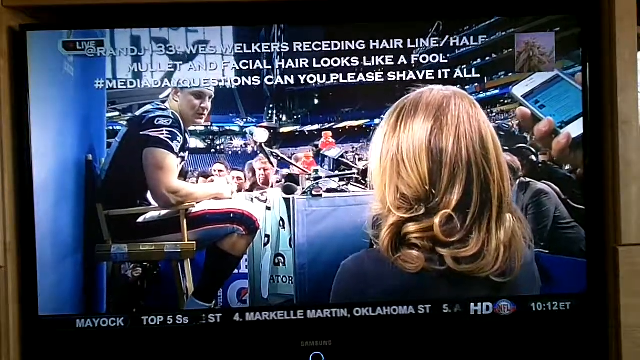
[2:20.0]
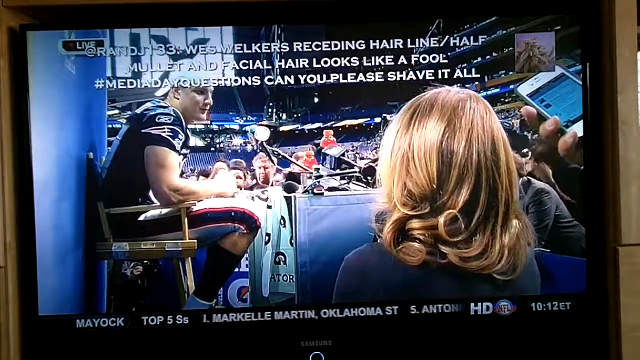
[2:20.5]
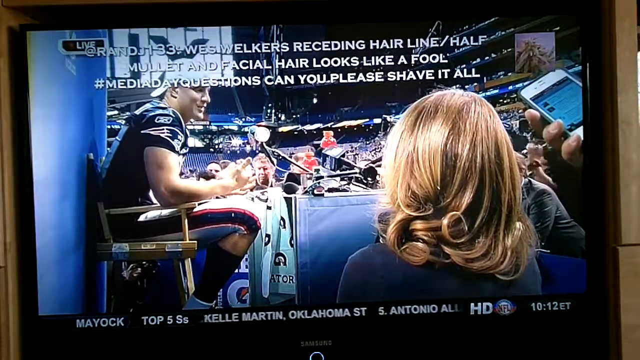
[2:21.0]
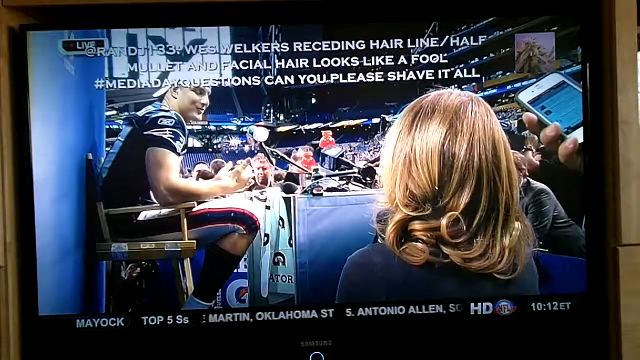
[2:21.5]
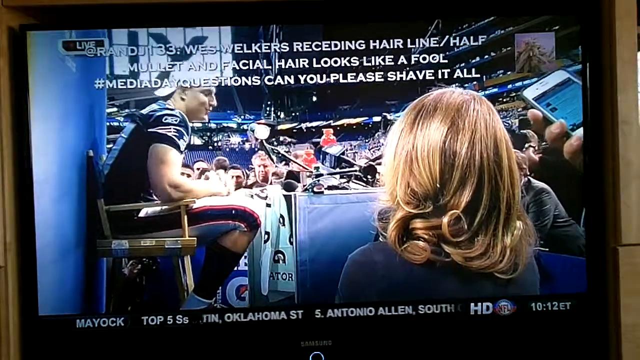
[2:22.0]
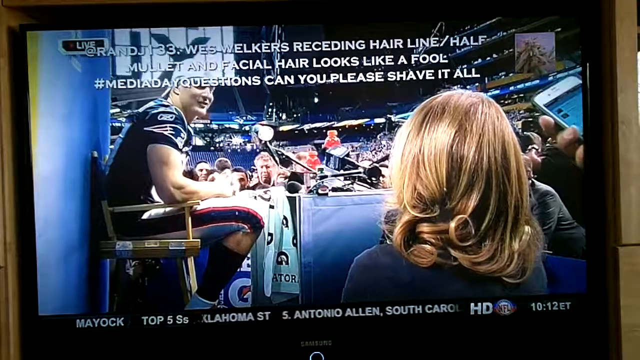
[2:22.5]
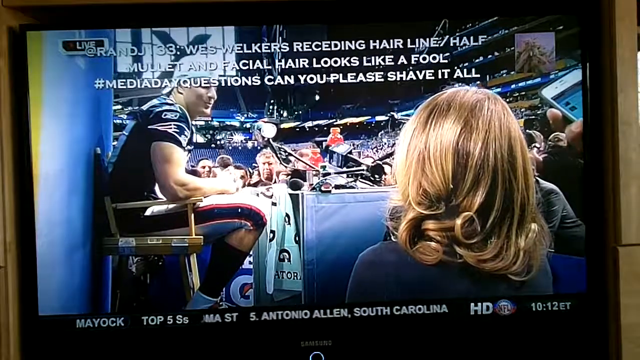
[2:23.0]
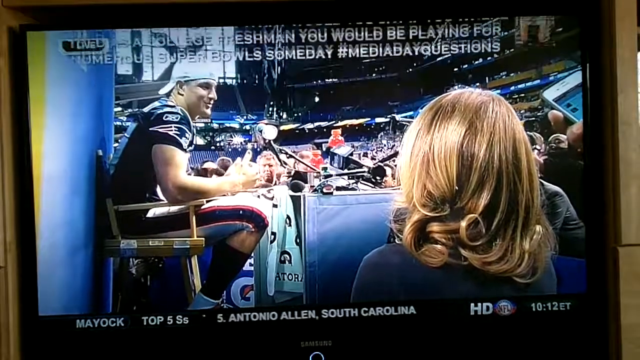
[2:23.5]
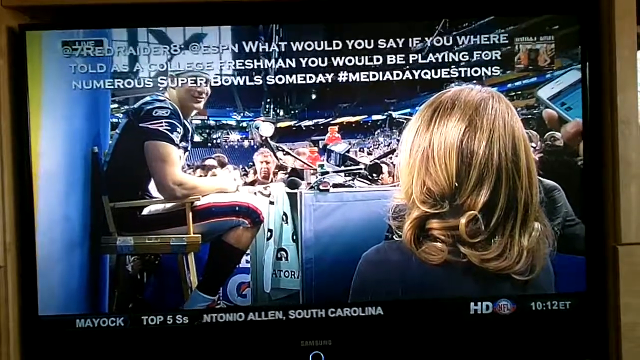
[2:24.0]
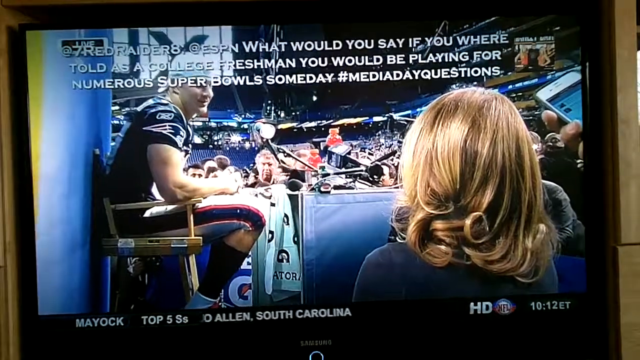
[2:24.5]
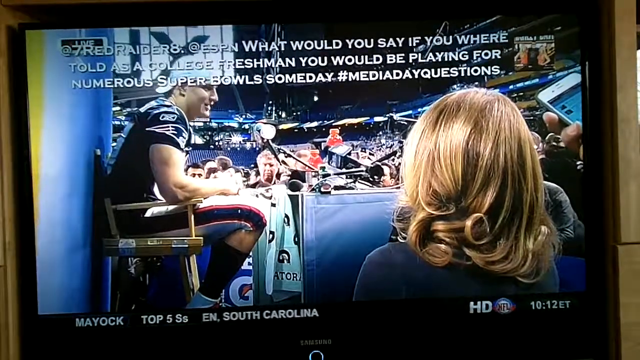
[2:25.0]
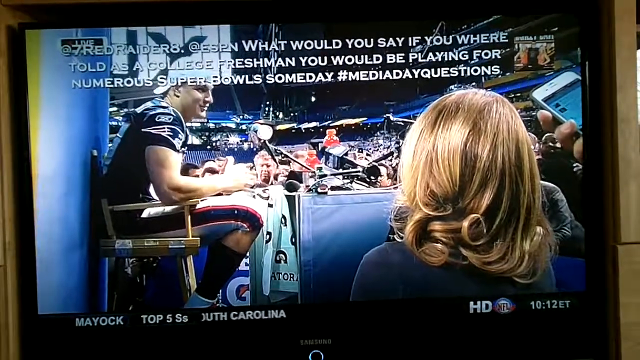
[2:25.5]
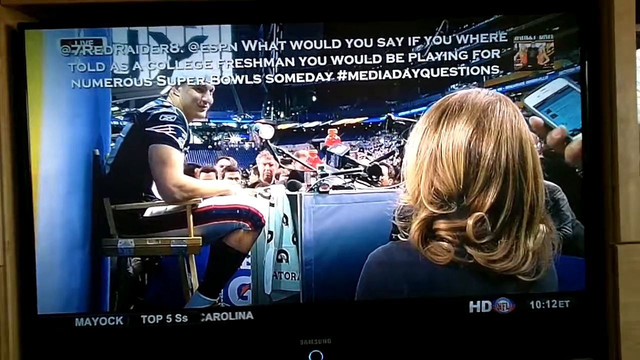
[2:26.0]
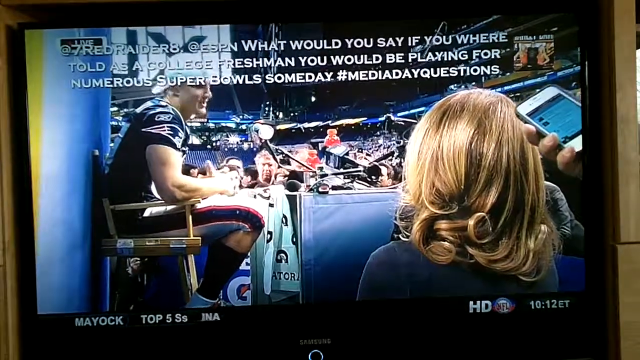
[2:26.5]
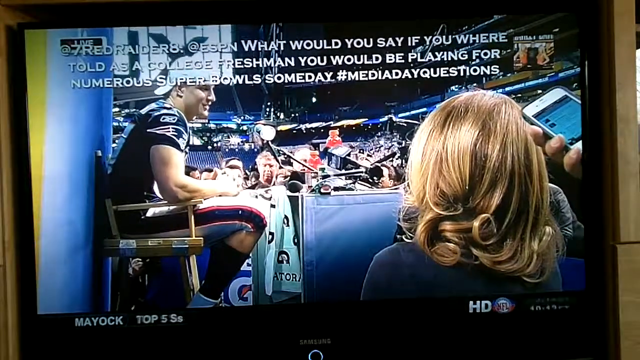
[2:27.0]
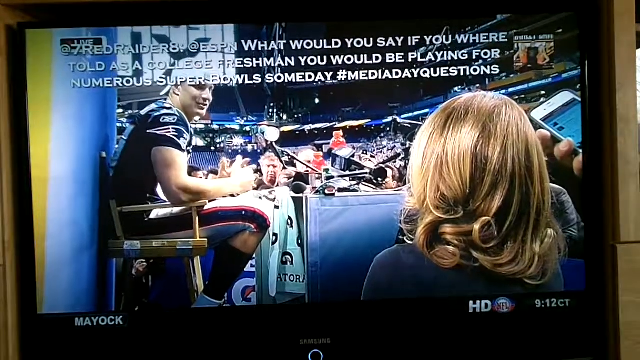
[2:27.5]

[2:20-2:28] The scene shows what looks like a stage or setup inside a big stadium. A football player sits in a chair on the left side of the screen, and "live" appears in the top left corner. He wears a Patriots jersey that looks like a dark blue top, white pants with a blue and red stripe down the sides of the legs, and a white ball cap on backwards. On the right side of the screen there appears to be a woman with blonde hair, her back turned to the camera. In the top right corner, somebody is holding a cell phone with its screen visible. Various other people are in the background on the other side of the table, with only their heads visible. The football player talks into a microphone and to the woman with her back to the camera.